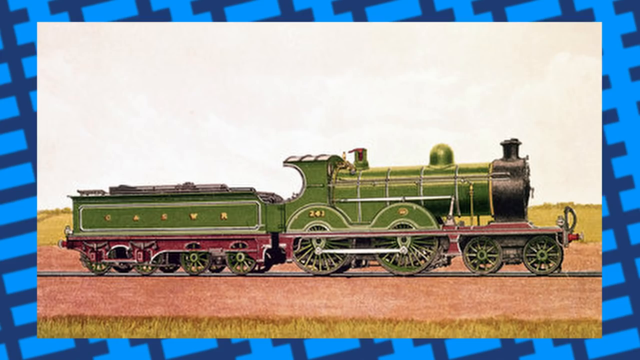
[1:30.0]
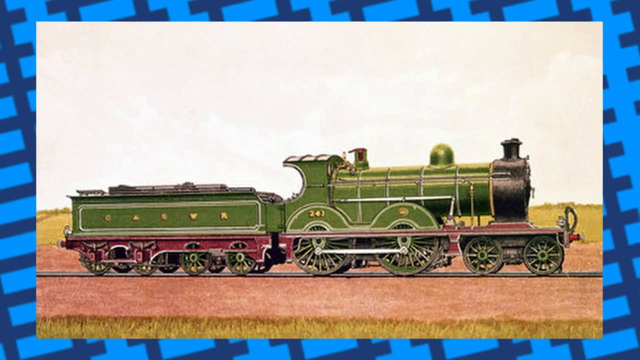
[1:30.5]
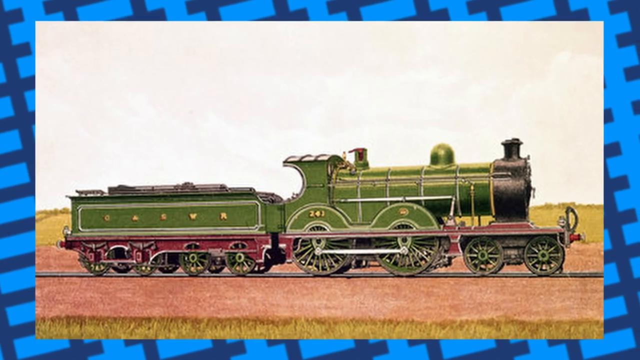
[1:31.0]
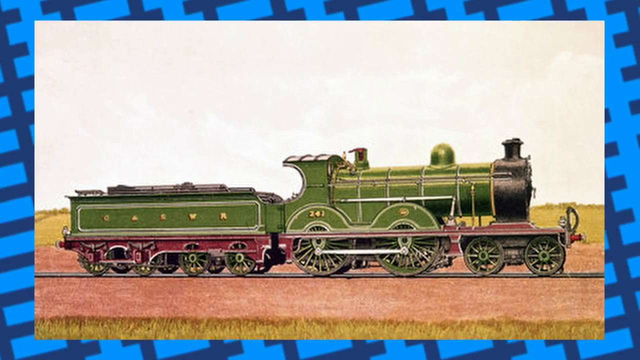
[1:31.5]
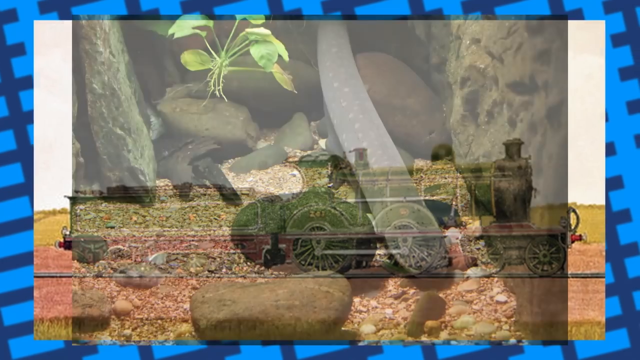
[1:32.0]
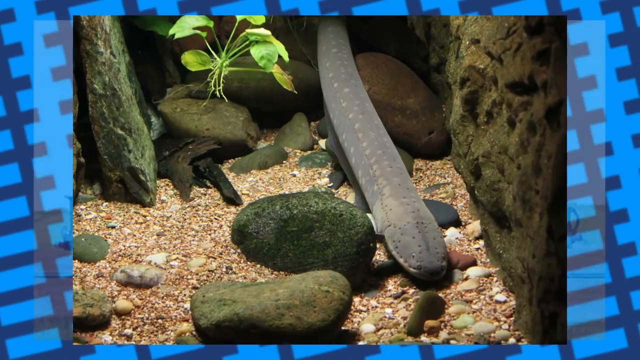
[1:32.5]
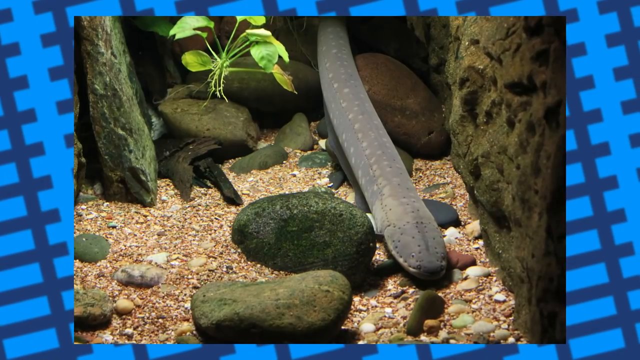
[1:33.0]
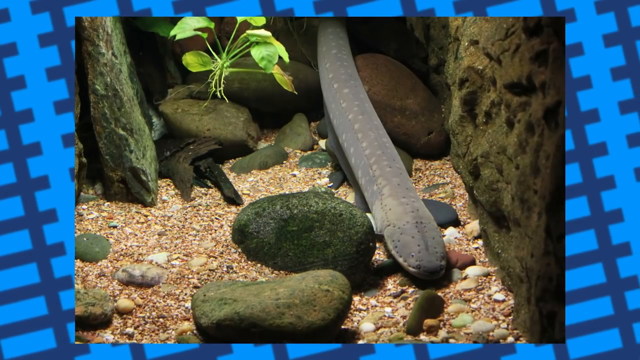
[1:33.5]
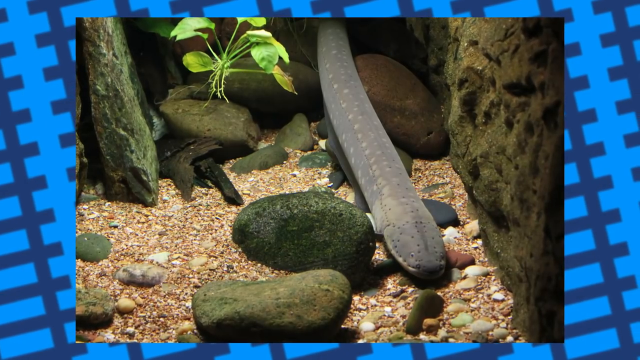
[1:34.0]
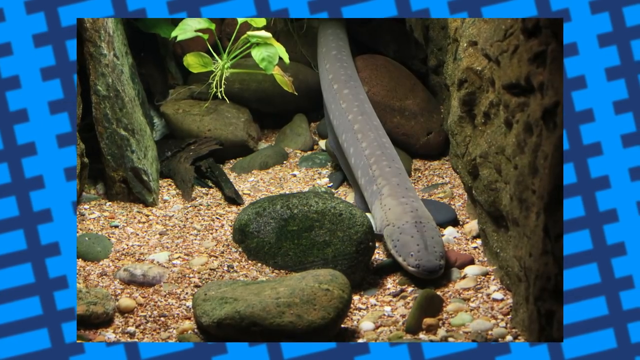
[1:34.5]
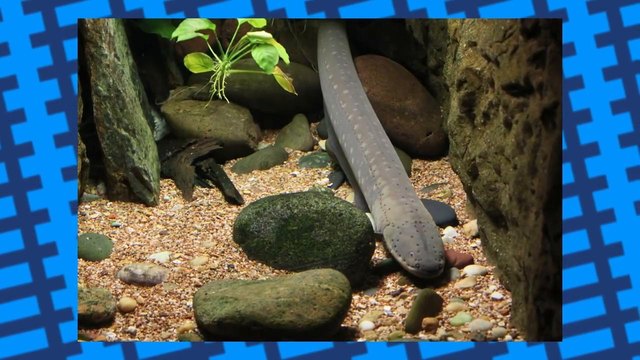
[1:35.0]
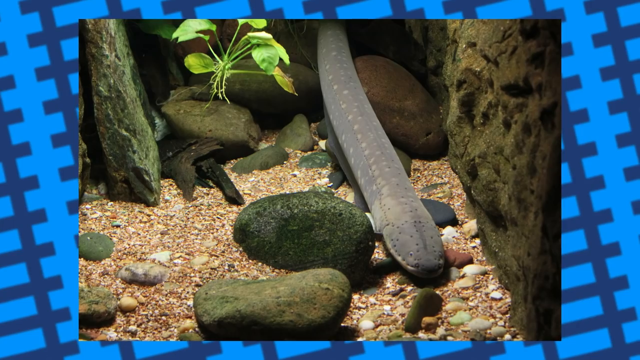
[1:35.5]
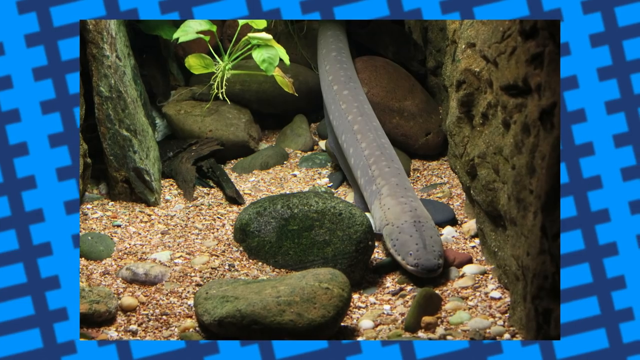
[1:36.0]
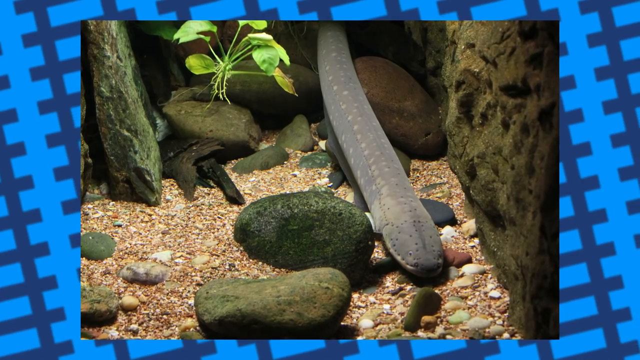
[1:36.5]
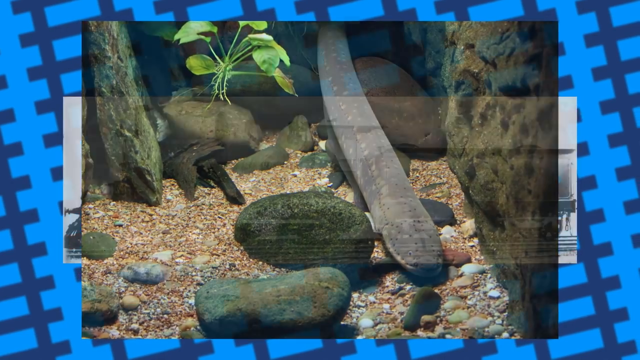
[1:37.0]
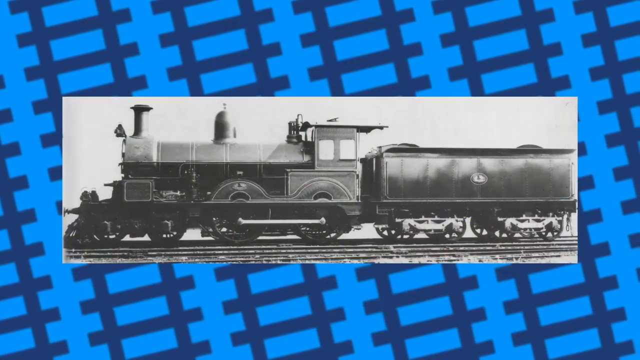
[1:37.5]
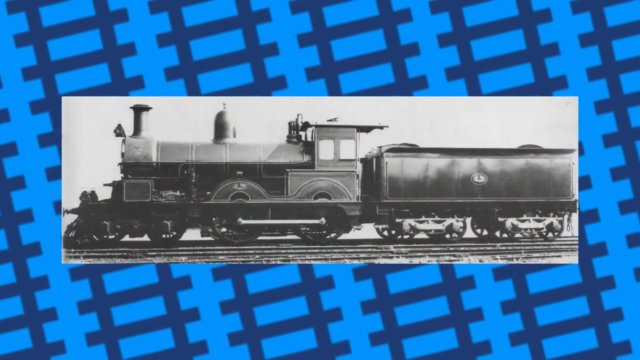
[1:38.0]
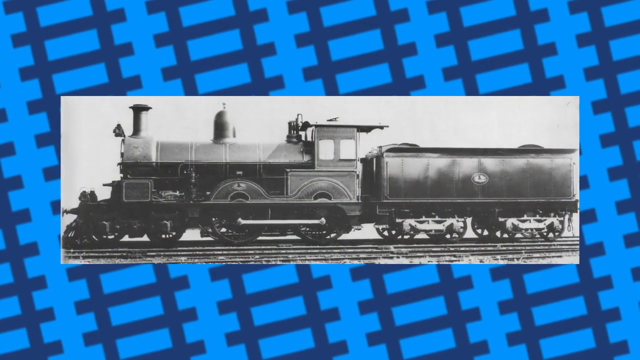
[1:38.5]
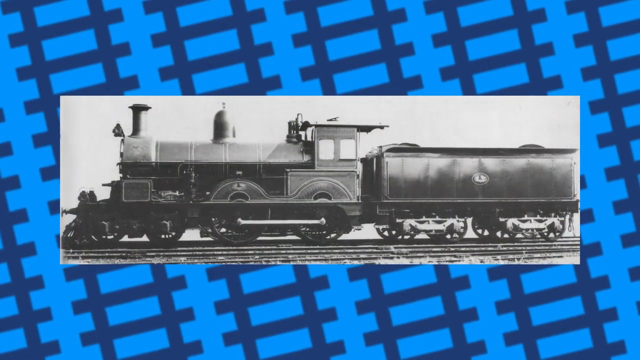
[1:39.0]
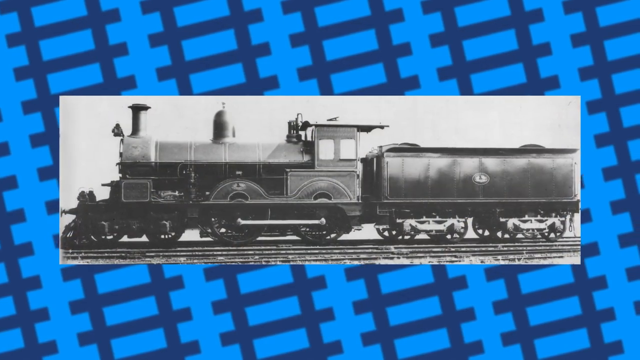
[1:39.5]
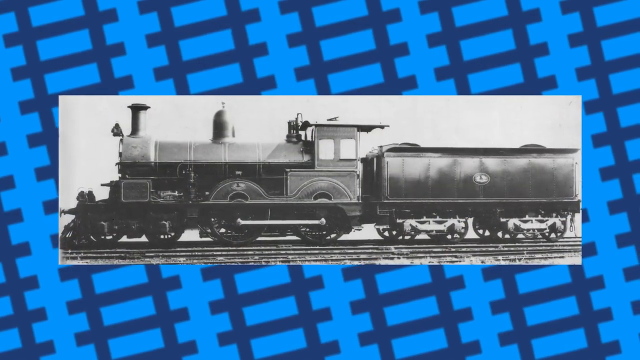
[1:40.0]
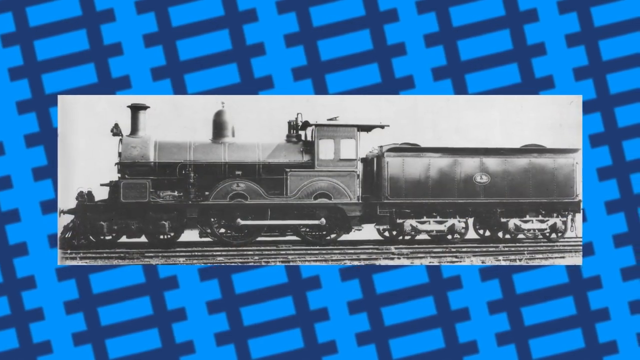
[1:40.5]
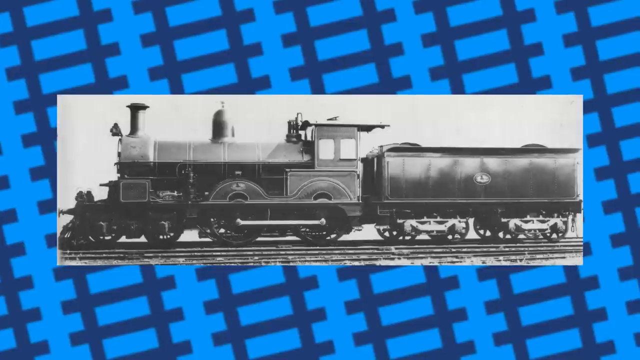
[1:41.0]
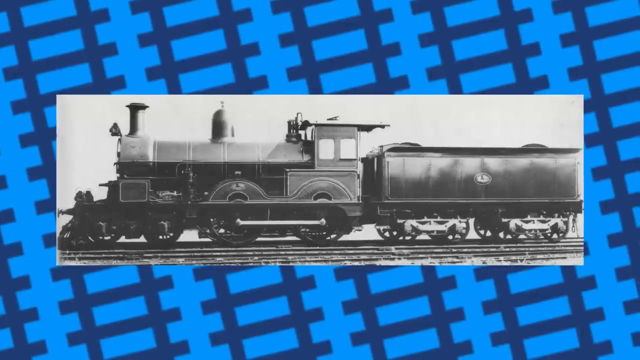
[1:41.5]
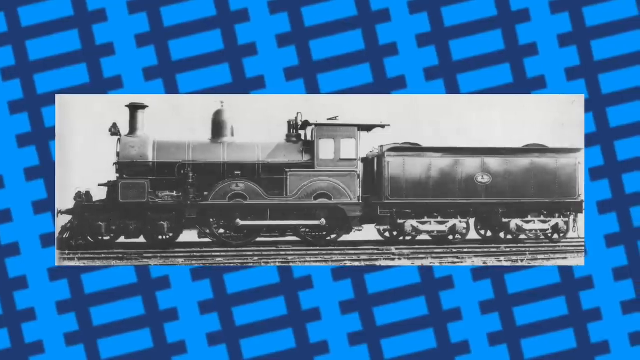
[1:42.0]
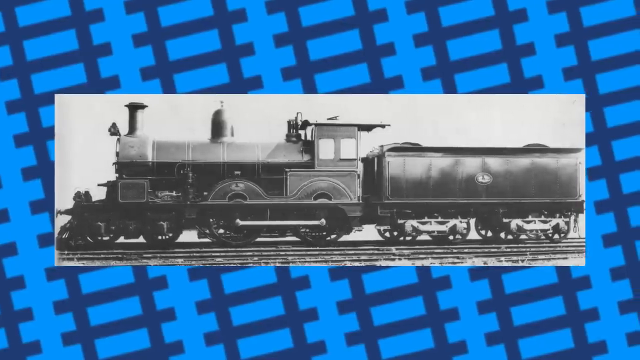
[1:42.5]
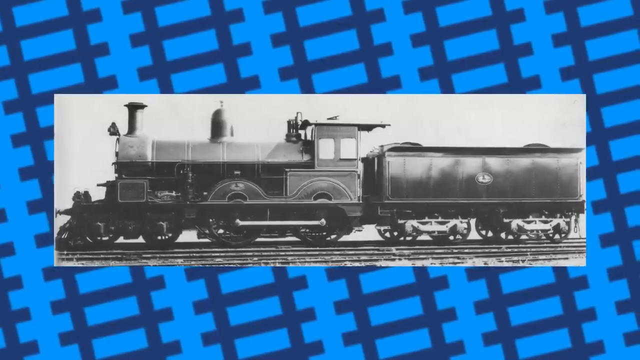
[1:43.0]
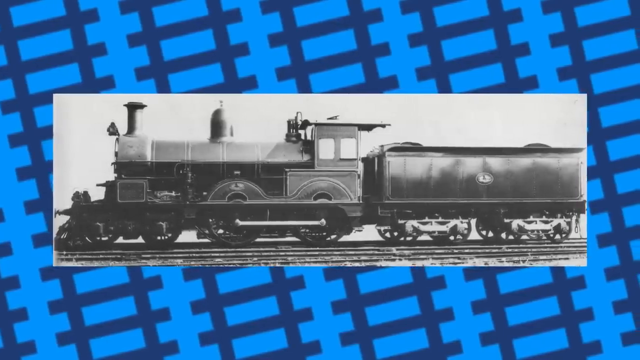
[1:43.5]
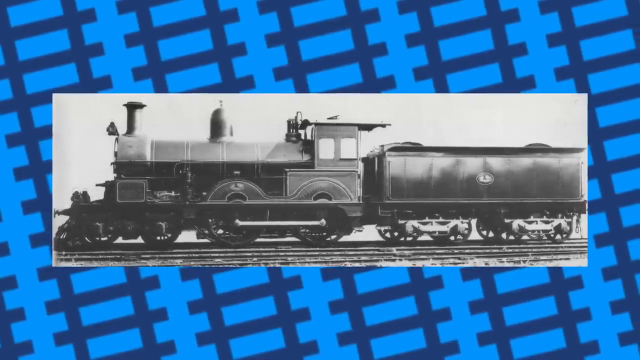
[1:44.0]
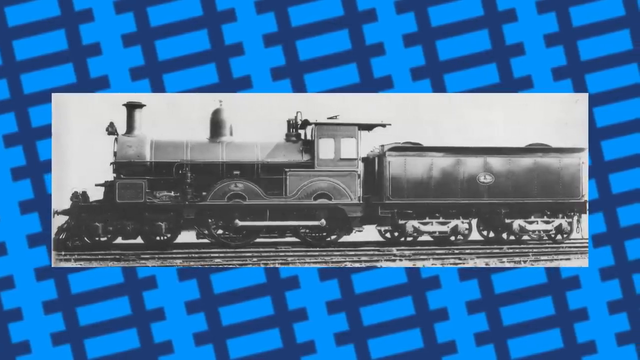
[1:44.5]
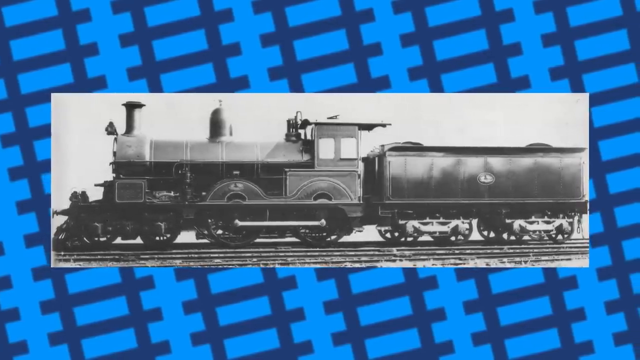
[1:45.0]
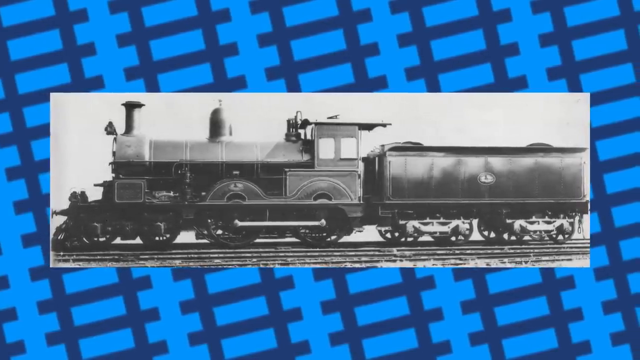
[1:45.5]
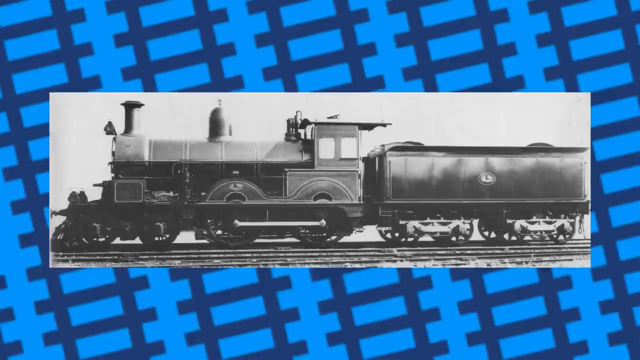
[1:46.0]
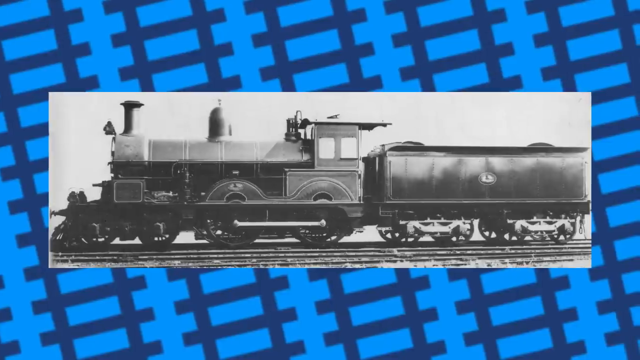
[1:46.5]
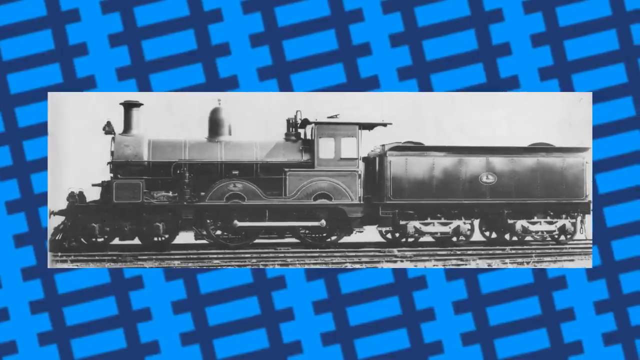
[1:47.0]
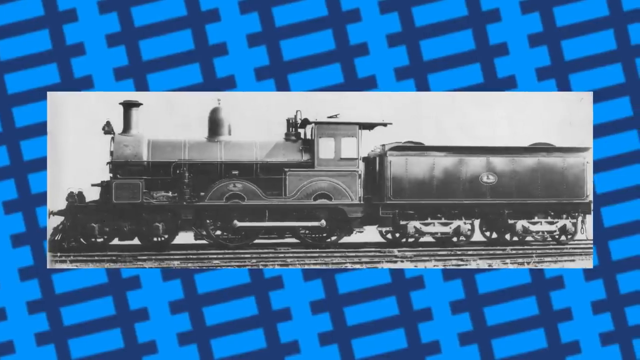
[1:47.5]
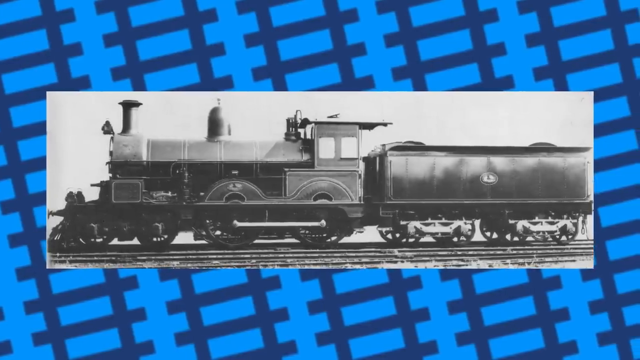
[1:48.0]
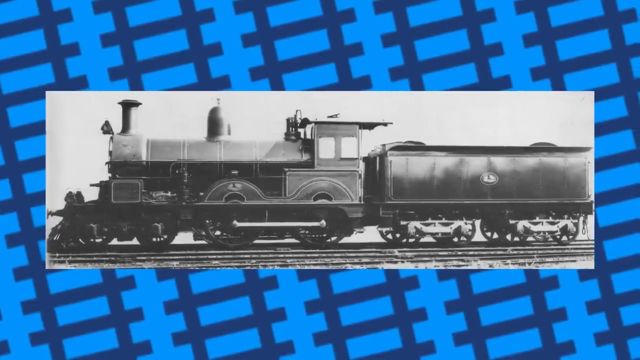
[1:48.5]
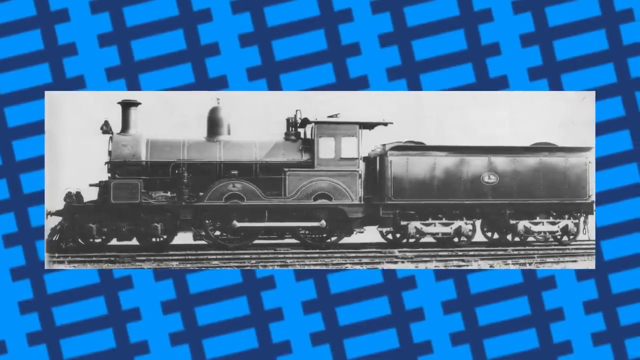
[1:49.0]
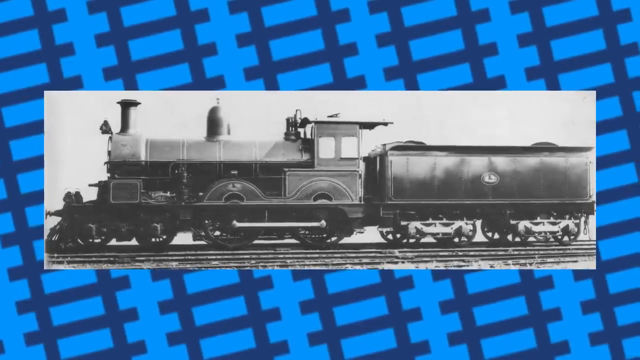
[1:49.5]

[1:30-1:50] The green train with the red bottom and yellow accents is still shown traveling along the dirt area with grass in the background; it is a drawing rather than a photograph of an actual train. The picture switches to what looks like an underwater scene, with a bunch of rocks: larger rocks around and small, roughly pea-sized rocks at the bottom. There is one plant and what looks like an eel. It then switches to another black and white photograph of a train; its color cannot be told, but it looks to be a darker color, and the background and sky are hard to make out because the photo is black and white. The same light blue background with diagonal dark blue railroad tracks remains.